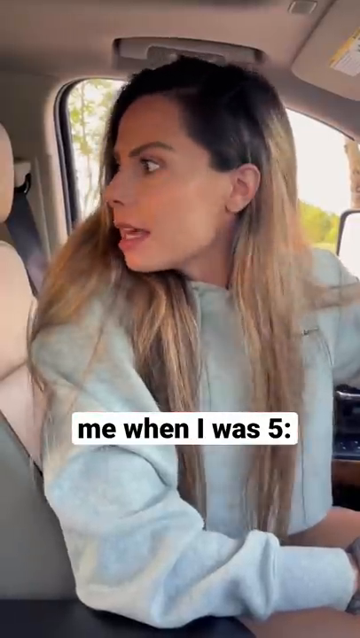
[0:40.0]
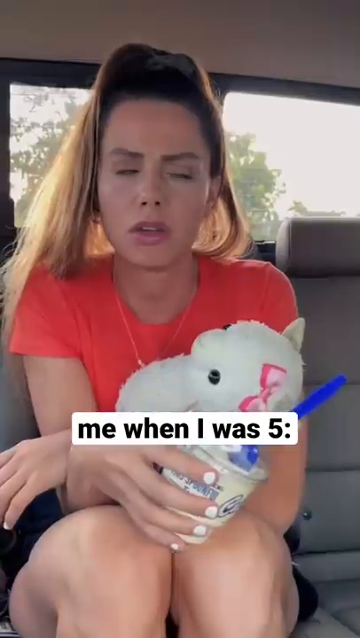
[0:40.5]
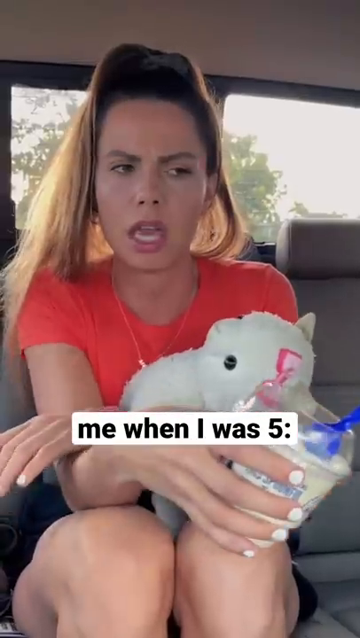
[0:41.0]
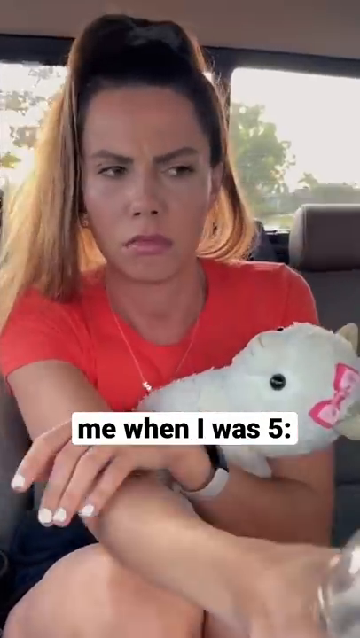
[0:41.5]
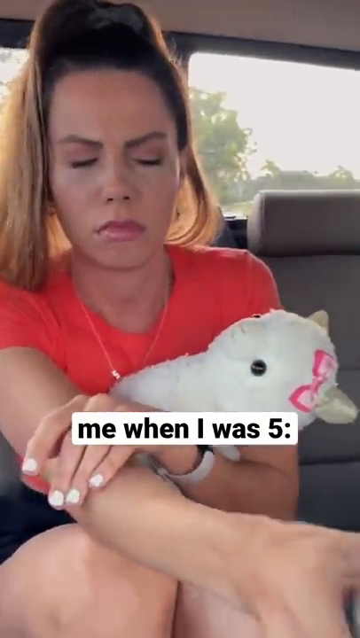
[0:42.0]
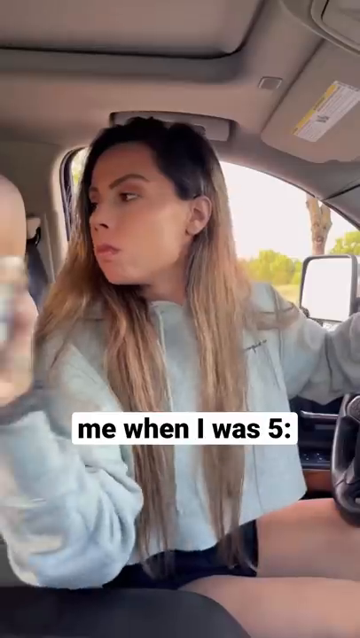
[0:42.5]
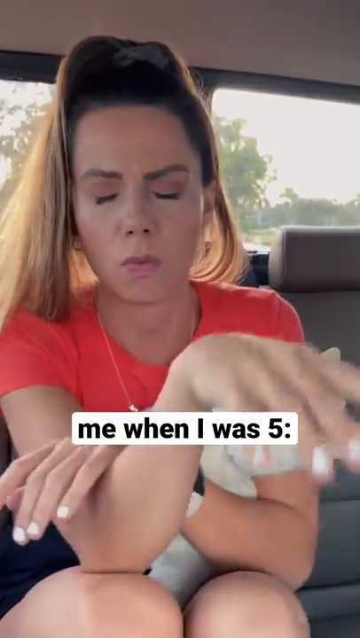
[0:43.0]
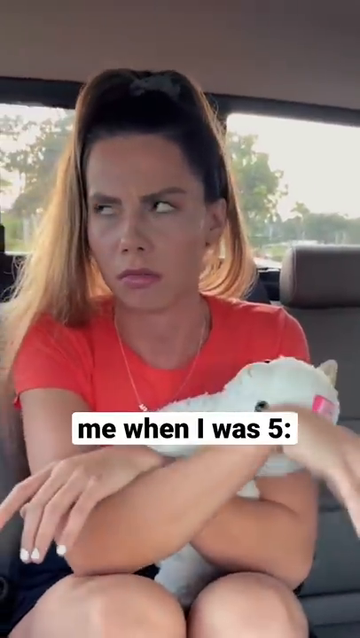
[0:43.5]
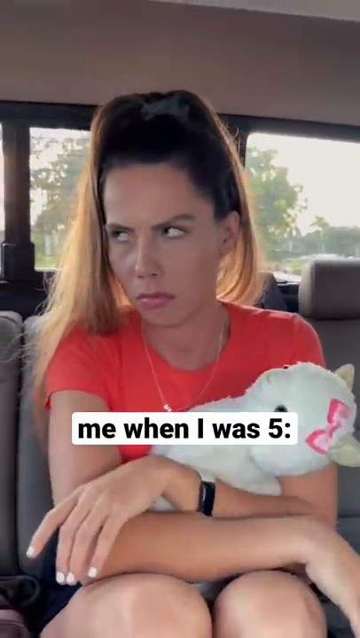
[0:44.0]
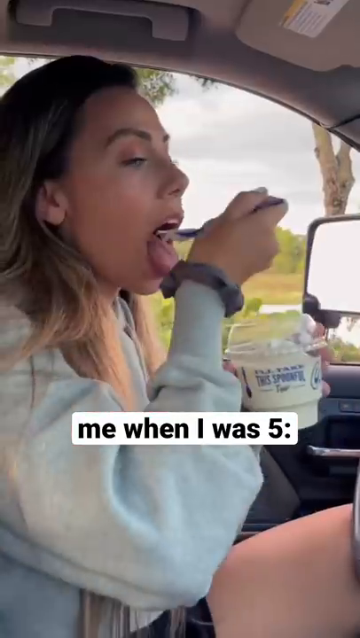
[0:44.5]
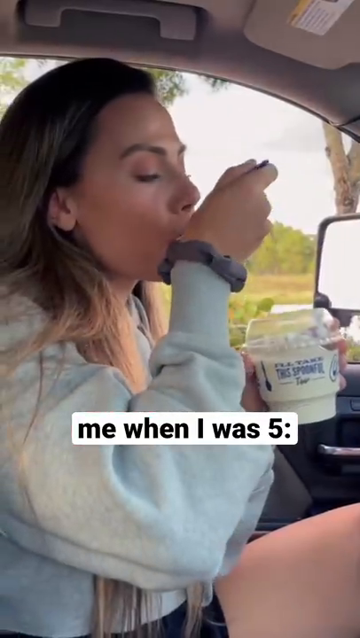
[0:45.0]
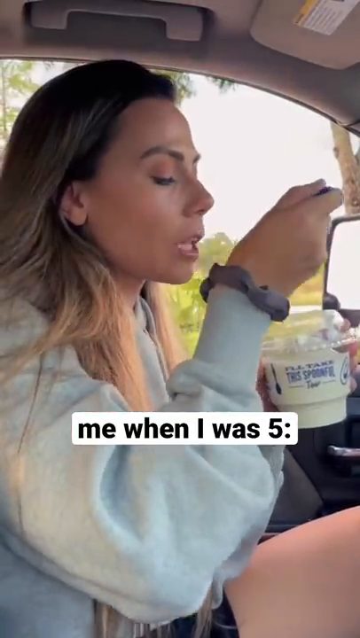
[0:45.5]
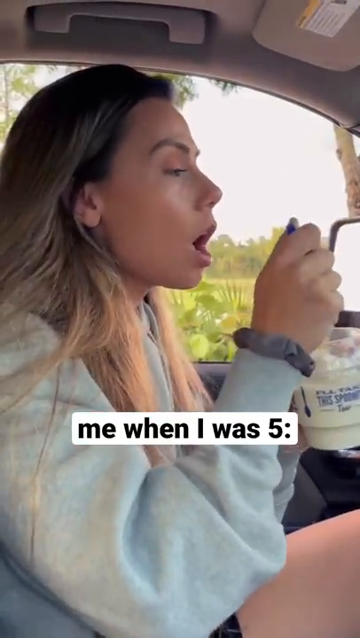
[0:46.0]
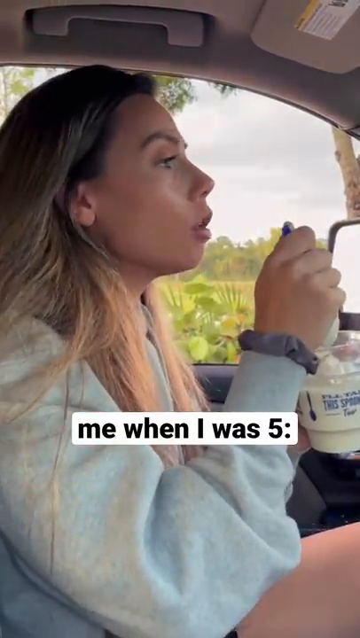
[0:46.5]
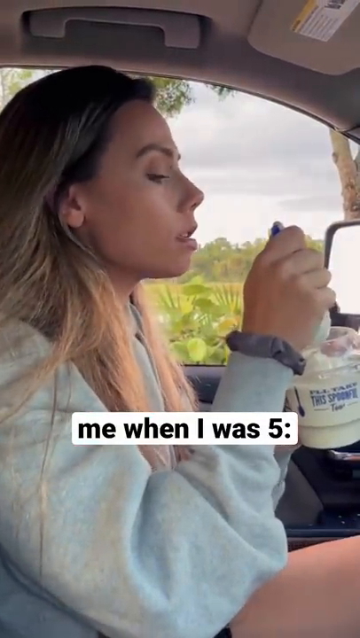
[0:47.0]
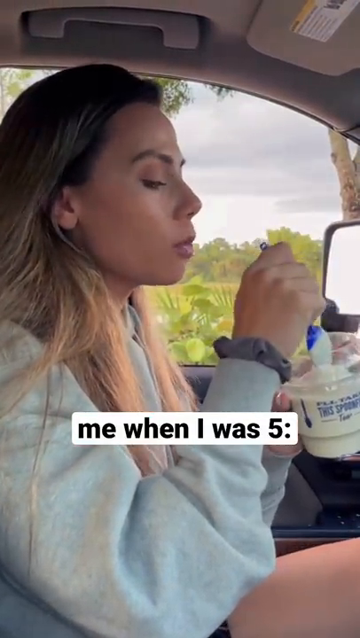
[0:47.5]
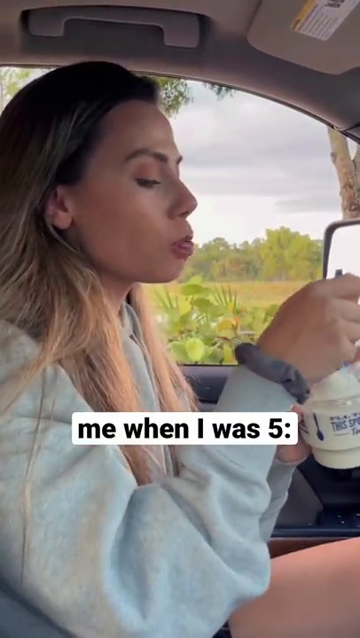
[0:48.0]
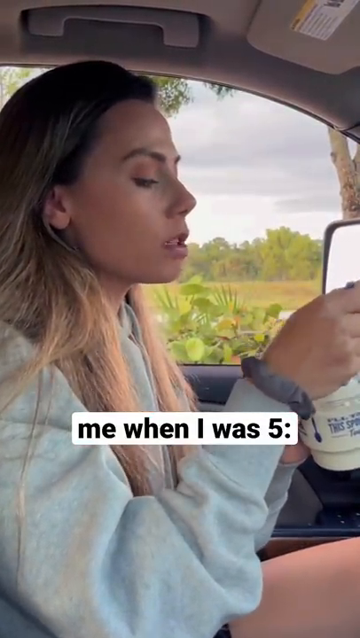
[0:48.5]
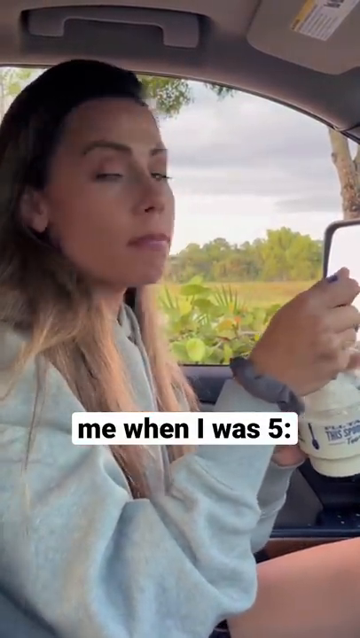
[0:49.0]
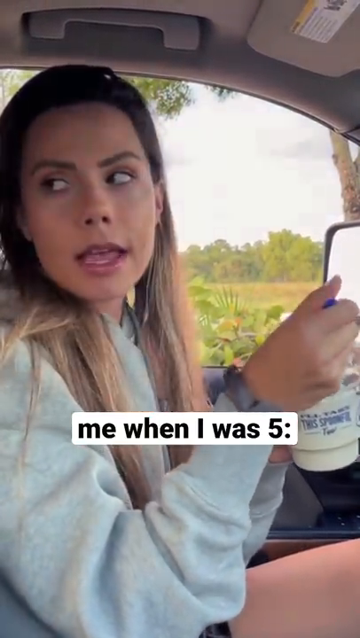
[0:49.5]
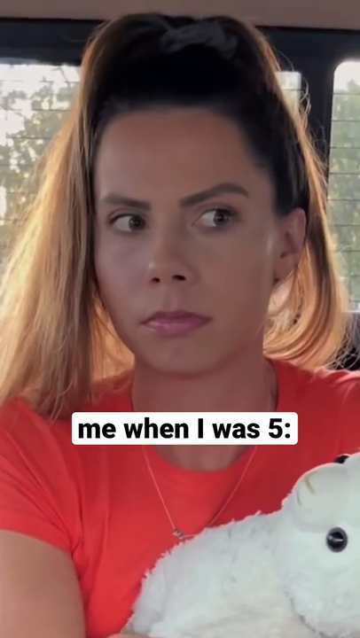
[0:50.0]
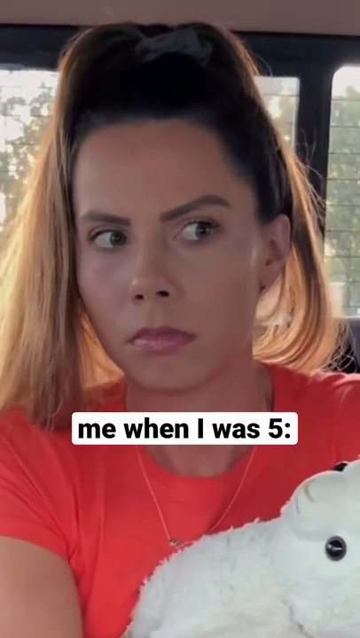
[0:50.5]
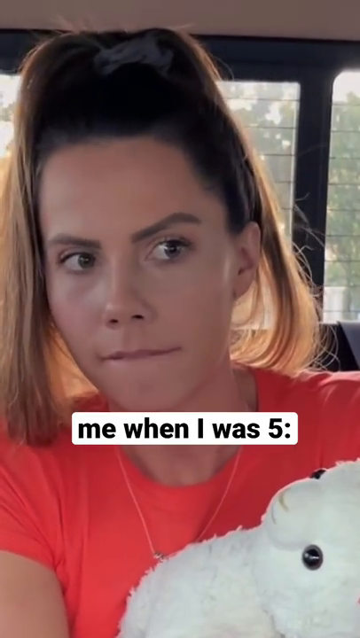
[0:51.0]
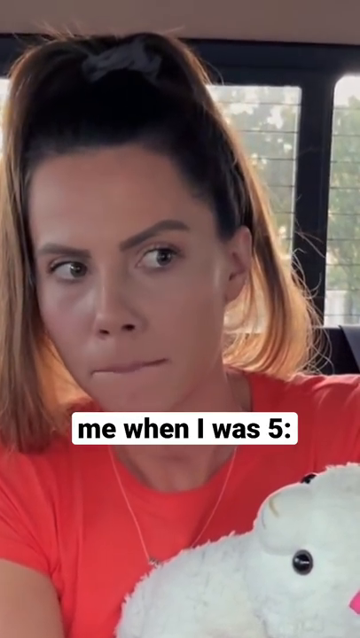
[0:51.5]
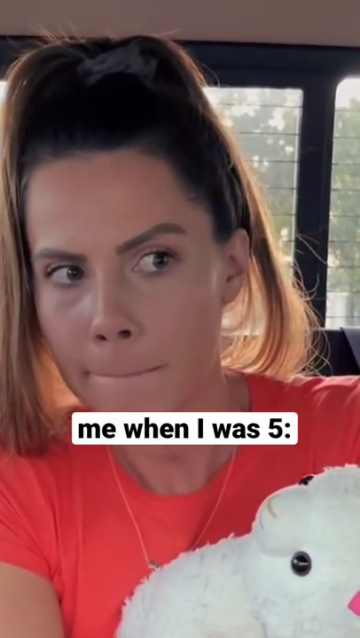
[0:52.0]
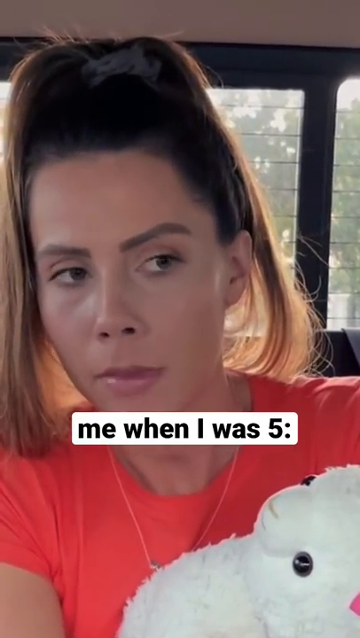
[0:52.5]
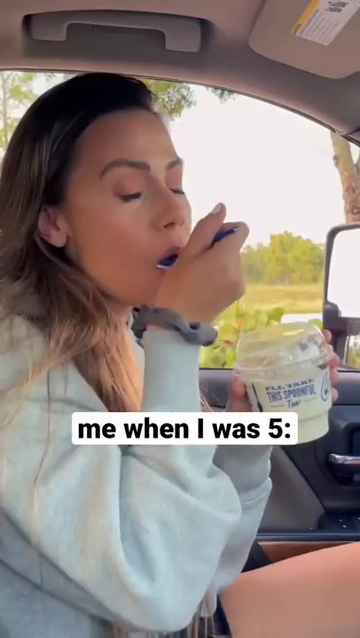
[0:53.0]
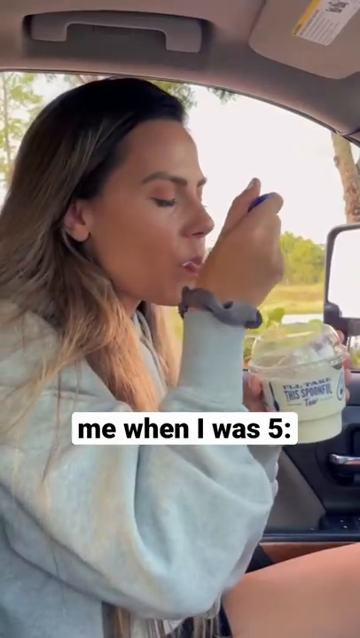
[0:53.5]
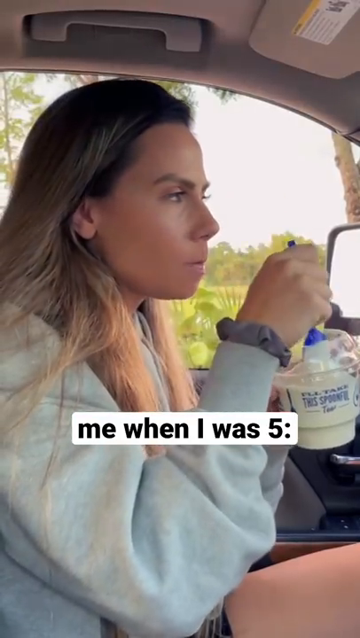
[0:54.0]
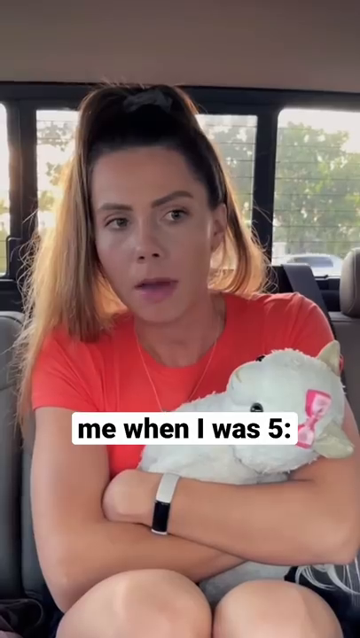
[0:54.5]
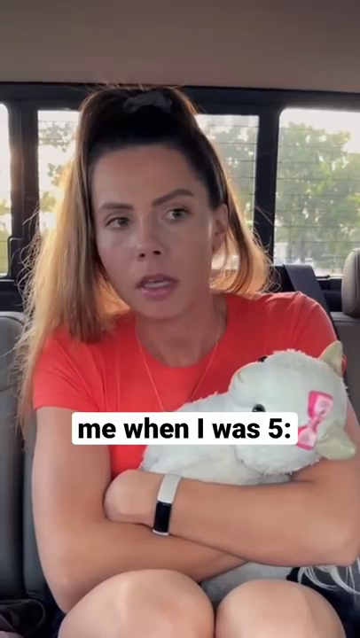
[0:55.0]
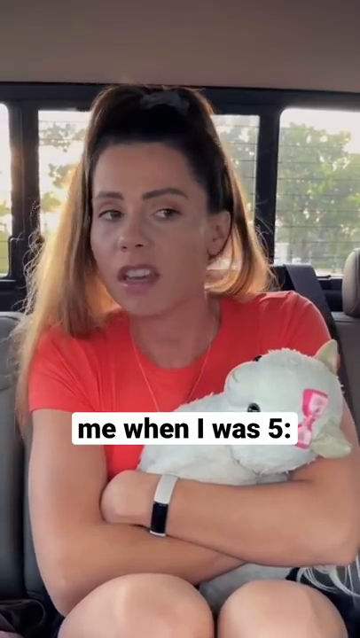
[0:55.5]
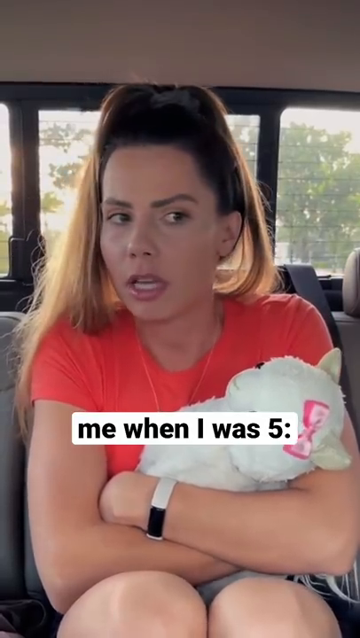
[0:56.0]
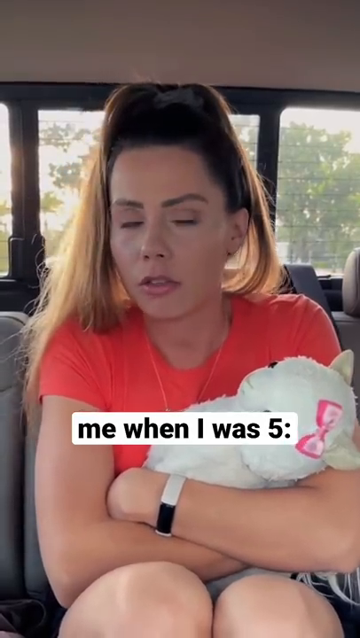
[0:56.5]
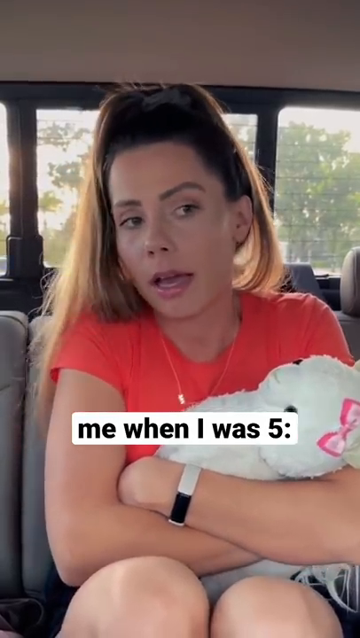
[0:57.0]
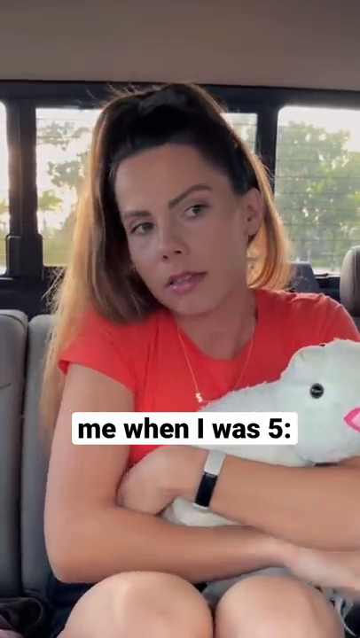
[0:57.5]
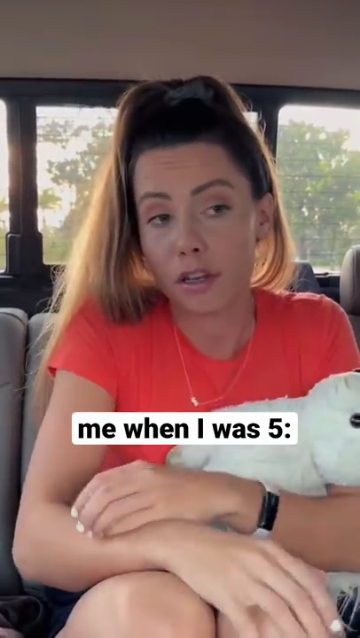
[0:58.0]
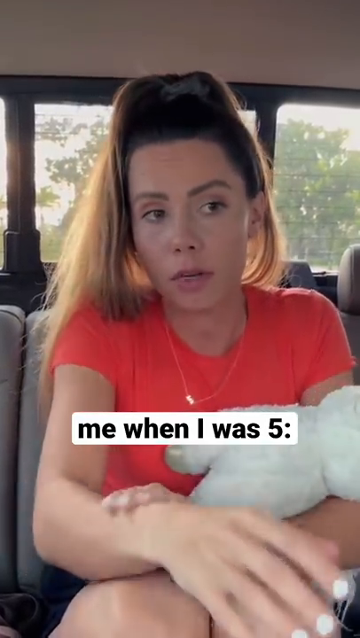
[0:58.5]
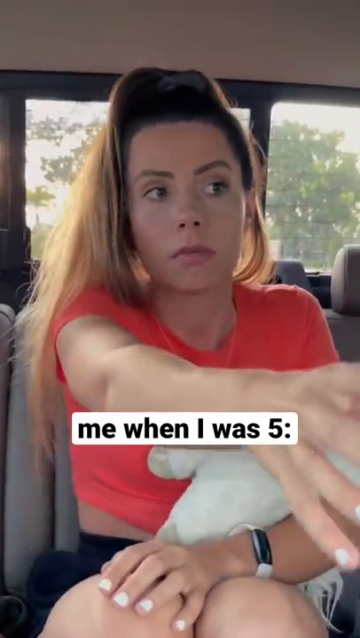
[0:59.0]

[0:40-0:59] The mother and daughter continue to argue in the car. The daughter hands the ice cream back to her mother, and the mother starts eating it. The daughter looks on and then asks for the ice cream back. The mother appears to really enjoy the ice cream, which makes the daughter curious and want it back. The same woman acts out both roles, and the shots flip back and forth. As the mother, she has her hair down and wears a gray hoodie with a scrunchie on her wrist, trying to get the daughter to calm down and take the ice cream. Then the screen flips to her as the five-year-old, wearing the melon-colored shirt and black shorts with a high ponytail. The daughter, sitting in the back seat, gets really curious about the ice cream since the mother seems to enjoy it so much, and puts her hands out to ask for it back.